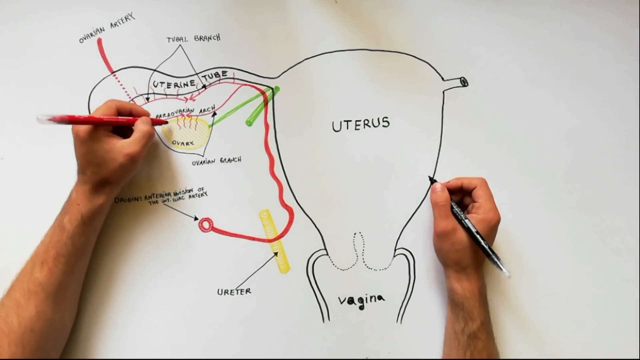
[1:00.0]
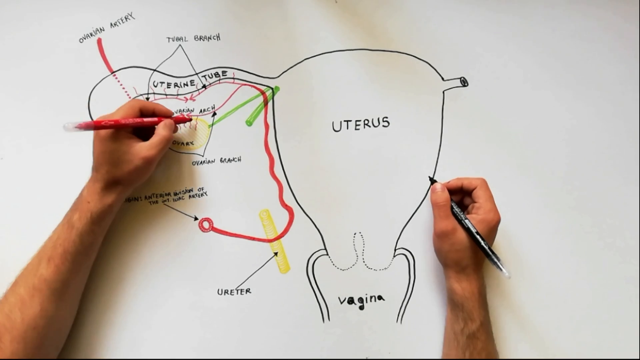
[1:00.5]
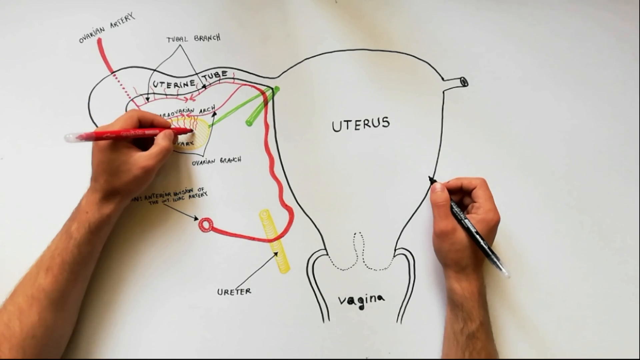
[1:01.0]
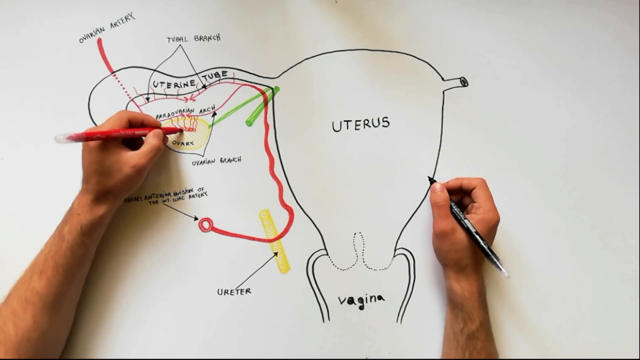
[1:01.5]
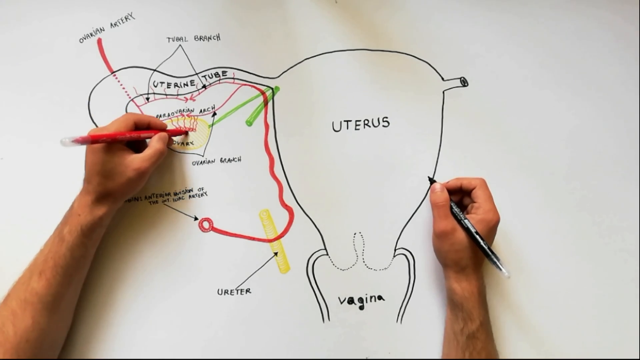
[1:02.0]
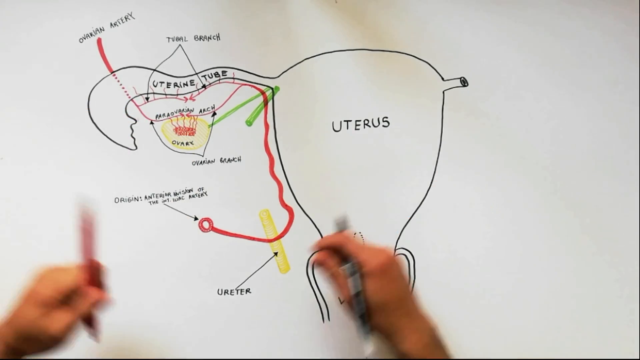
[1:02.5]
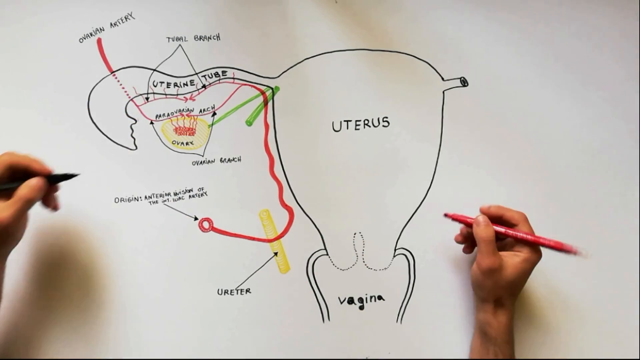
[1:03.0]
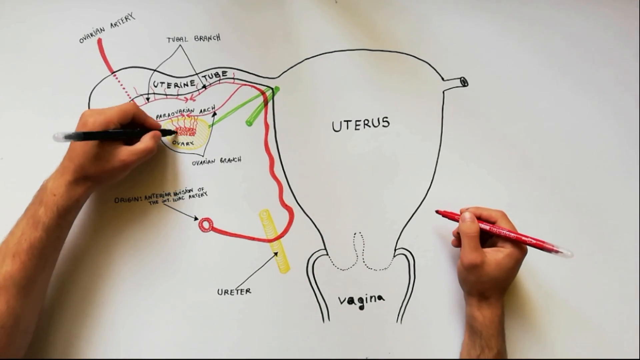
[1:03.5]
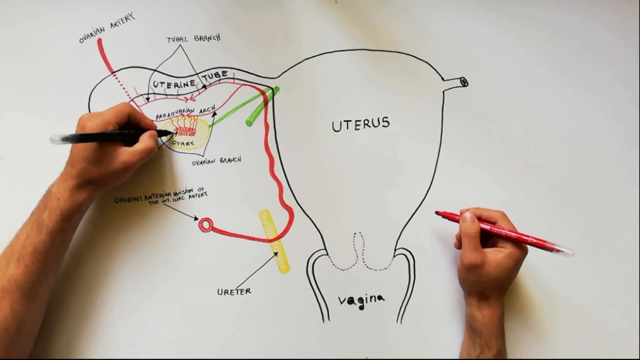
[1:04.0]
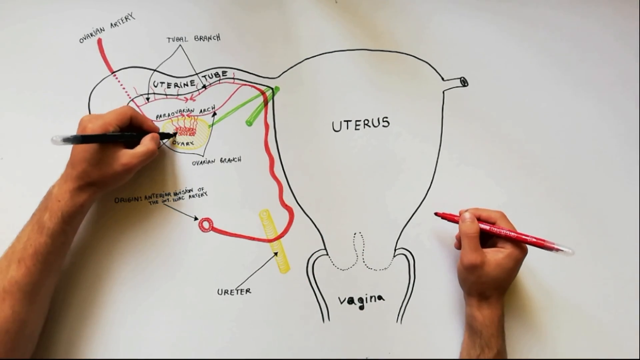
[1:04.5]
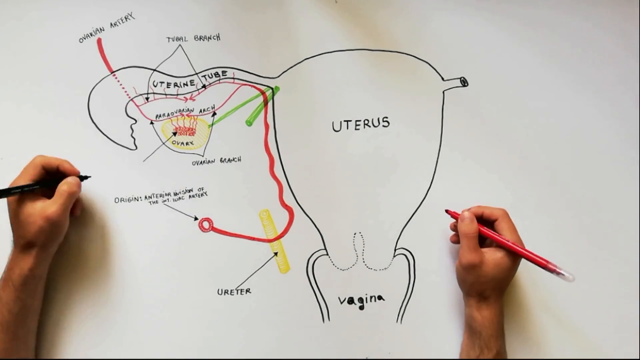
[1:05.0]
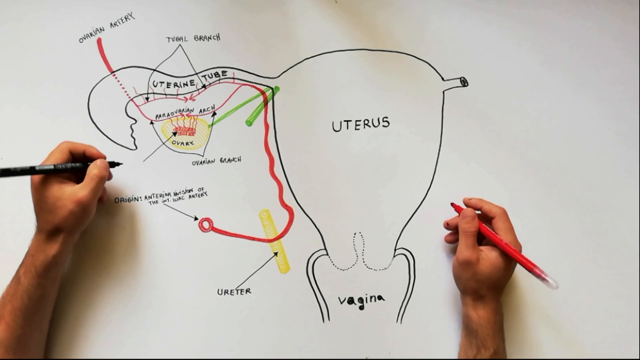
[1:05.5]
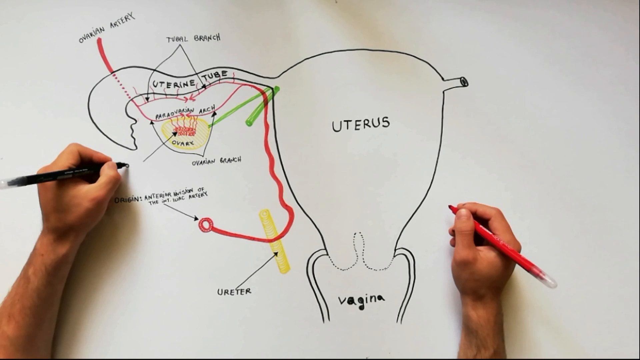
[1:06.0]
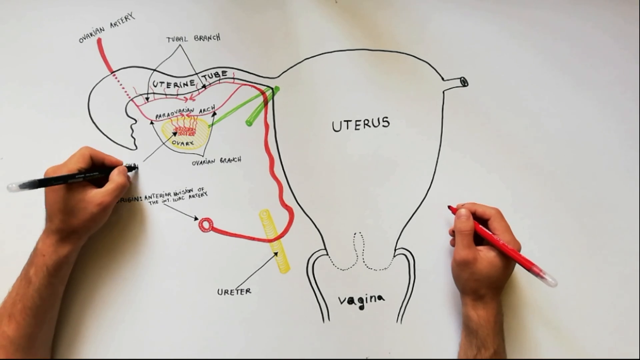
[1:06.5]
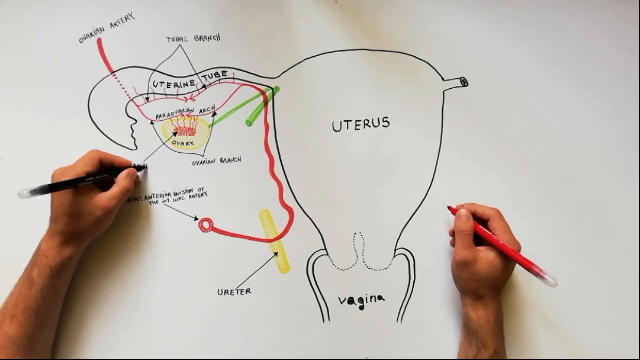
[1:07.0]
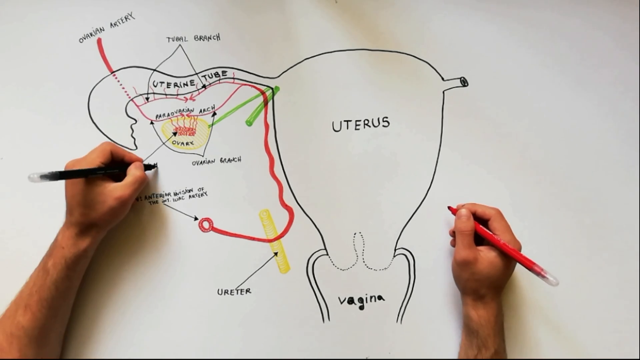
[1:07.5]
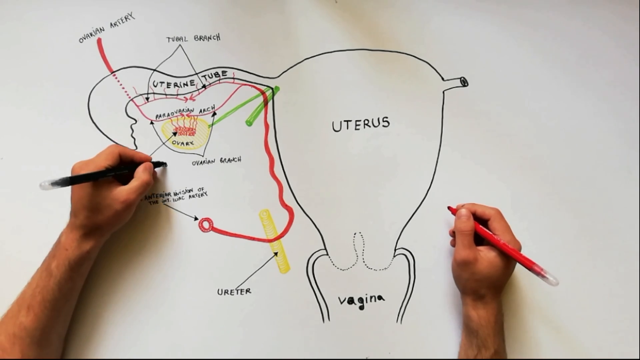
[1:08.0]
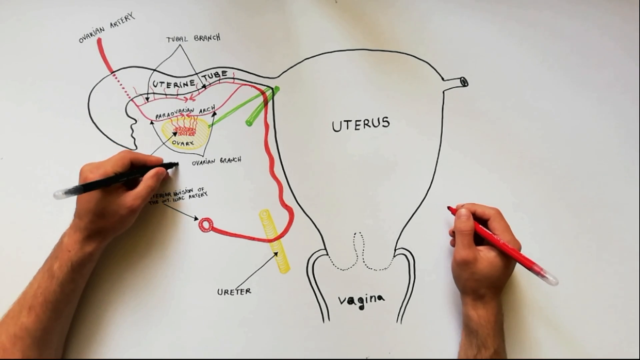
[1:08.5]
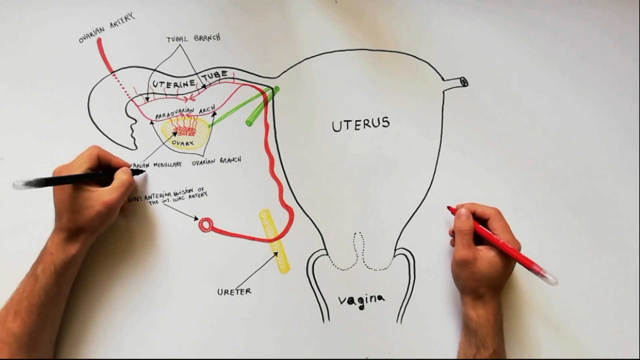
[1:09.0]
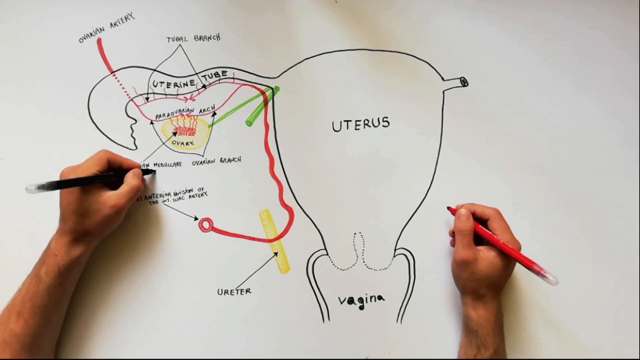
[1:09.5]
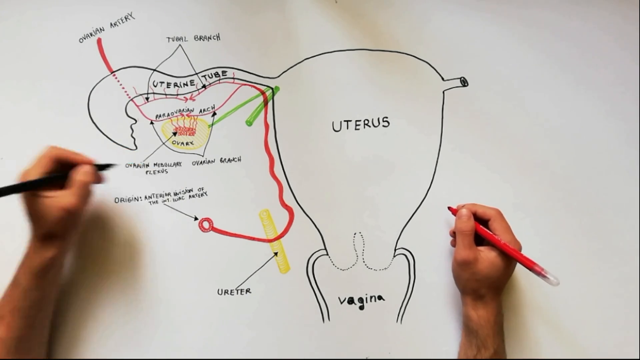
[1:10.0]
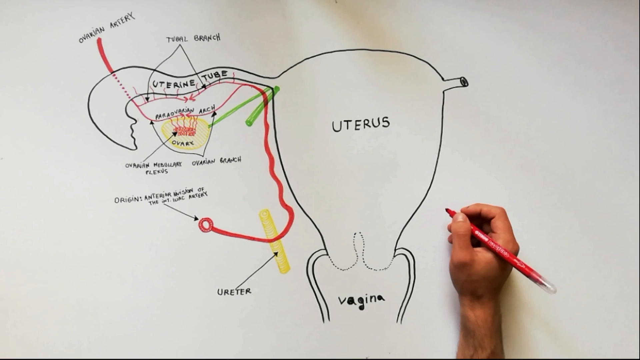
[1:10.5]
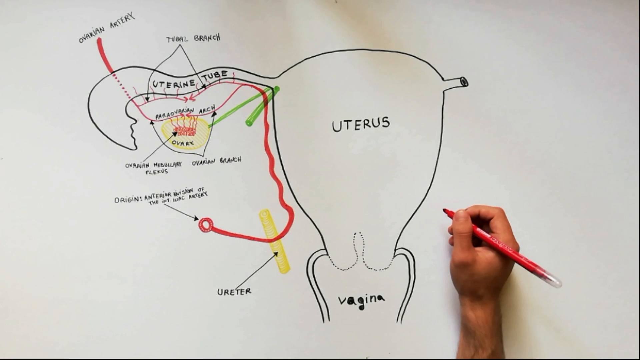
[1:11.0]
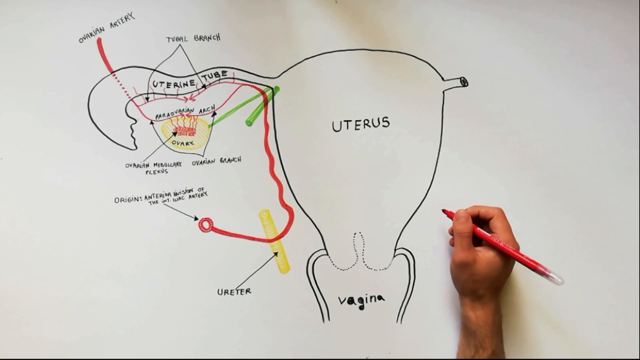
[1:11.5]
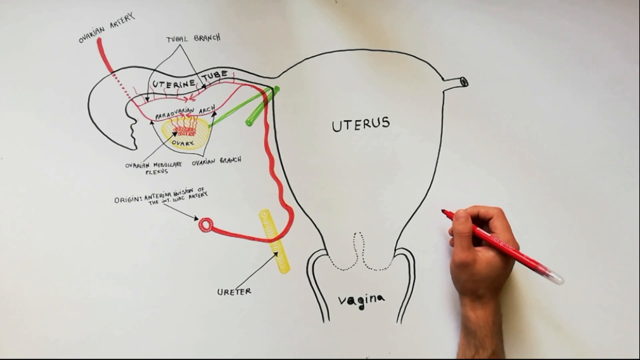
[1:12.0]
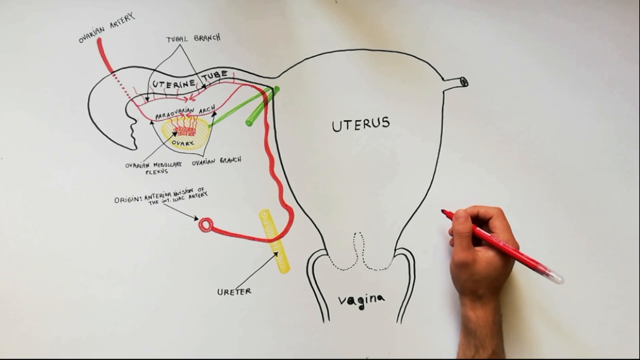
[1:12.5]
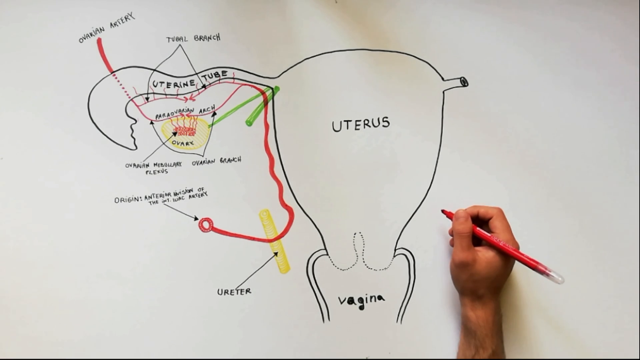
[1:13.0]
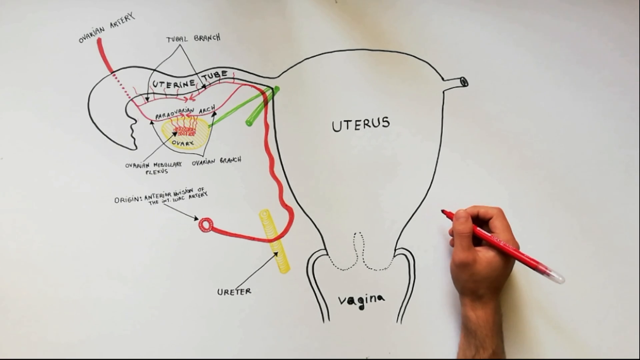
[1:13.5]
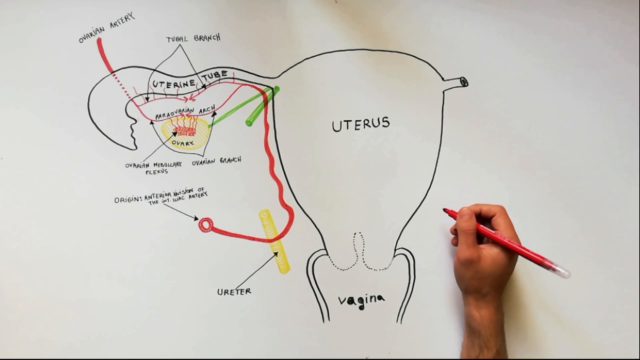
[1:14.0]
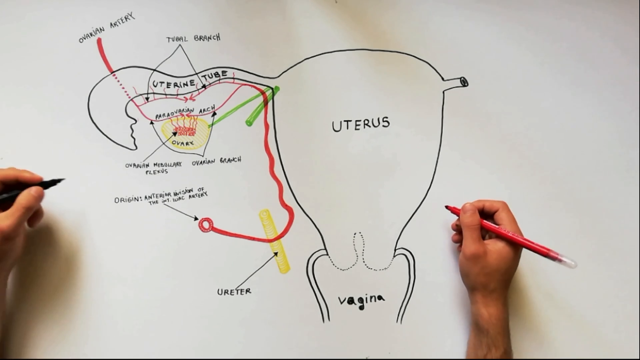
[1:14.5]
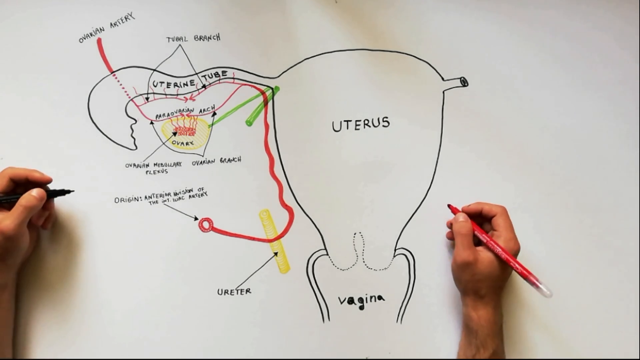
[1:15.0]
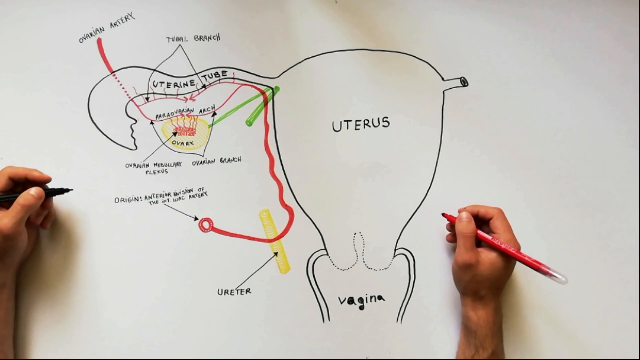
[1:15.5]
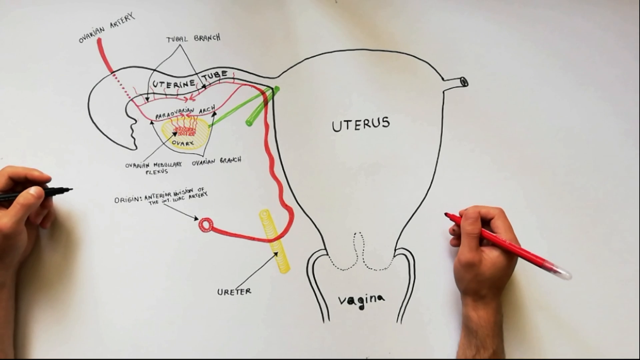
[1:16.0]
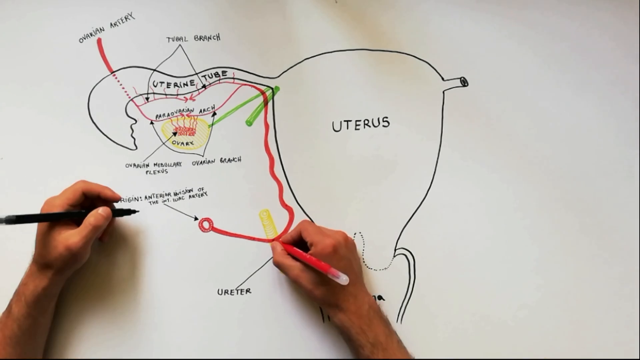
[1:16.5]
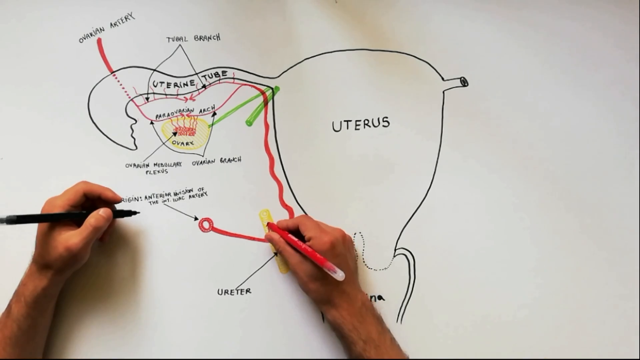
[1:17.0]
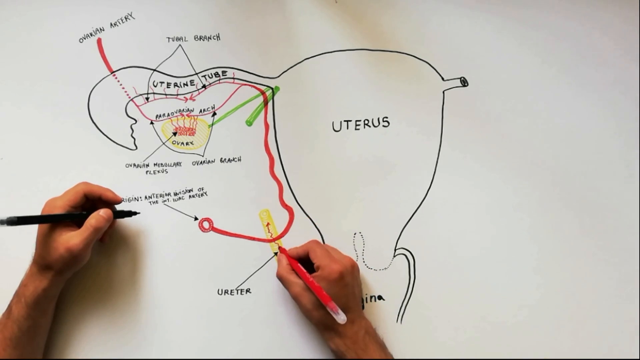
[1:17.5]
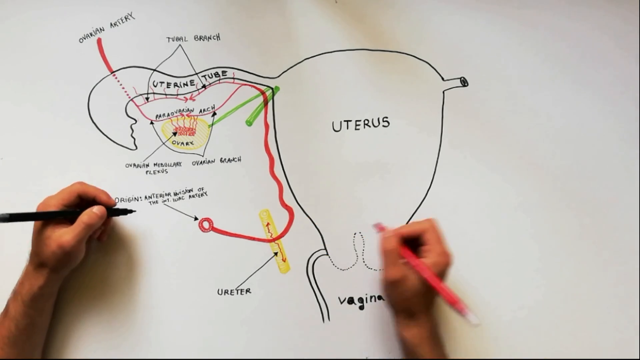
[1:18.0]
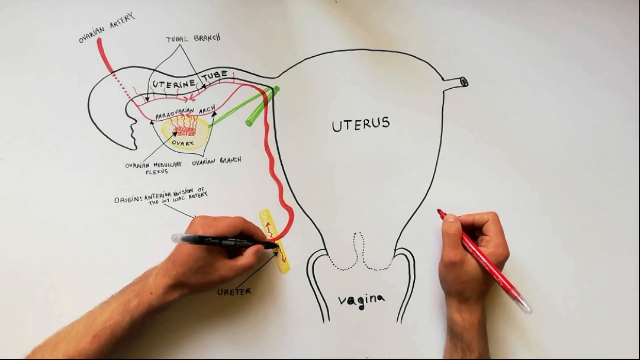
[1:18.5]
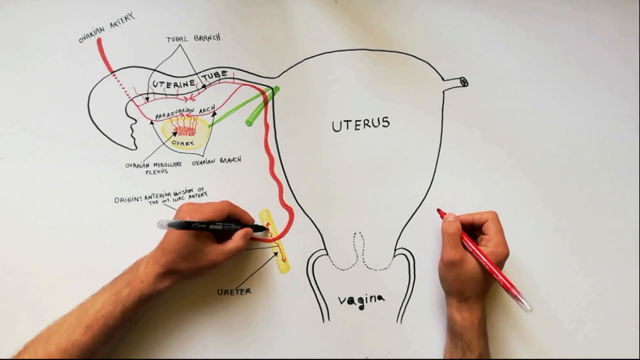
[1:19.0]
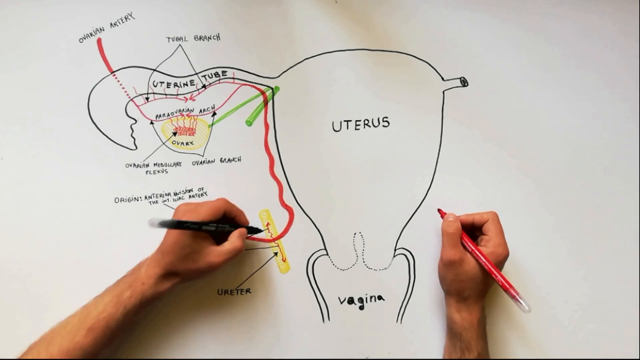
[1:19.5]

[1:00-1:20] A white drawing board lies on a table, with the camera above aiming down. Someone's left and right arms rest on the table; his right hand holds a black marker and his left hand holds a red marker. An oval shape is drawn with a black marker, with the word "uterus" in the middle. Coming down off the bottom of the oval are a tube on the left side and a tube on the right side, with the word "vagina" written in black between them. Another tube comes off the left side at the top of the oval, with "uterine tube" written inside it in black. Underneath that is a small yellow circle with the word "ovary" written on it in black. The person's left hand uses the red marker to make lines inside the ovary. He then puts the red marker in his right hand and the black marker in his left hand, draws an arrow pointing to the ovary, and writes "ovarian fluids" underneath it.